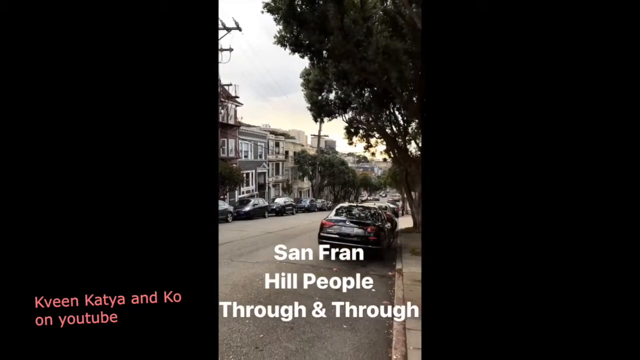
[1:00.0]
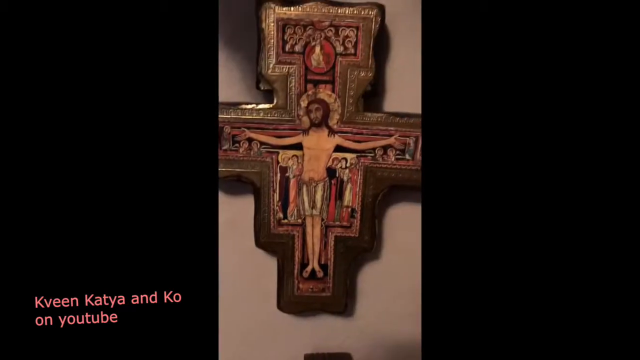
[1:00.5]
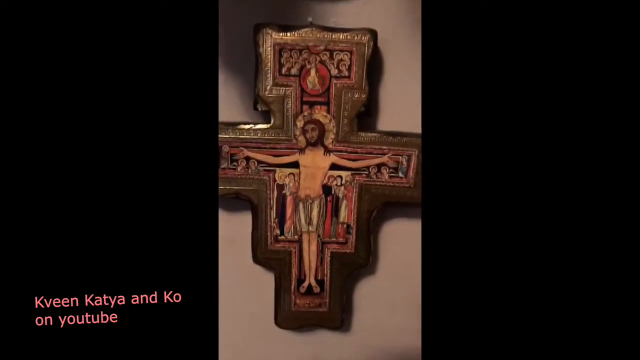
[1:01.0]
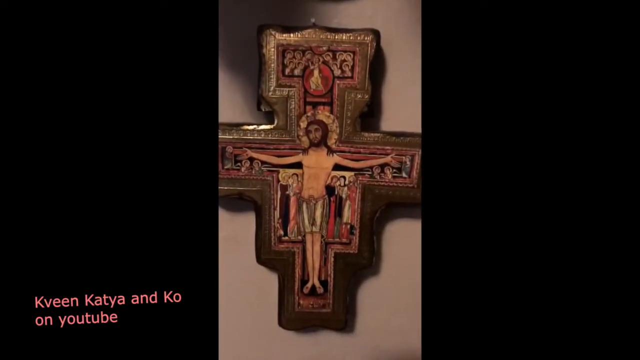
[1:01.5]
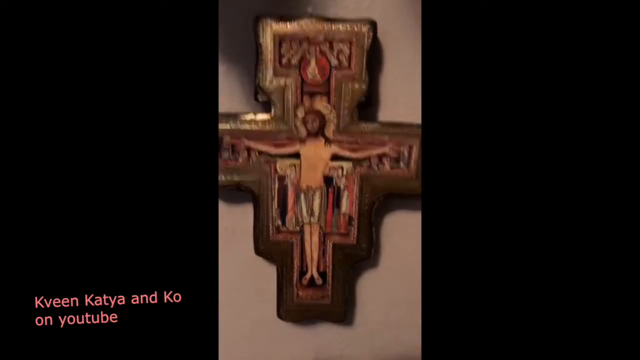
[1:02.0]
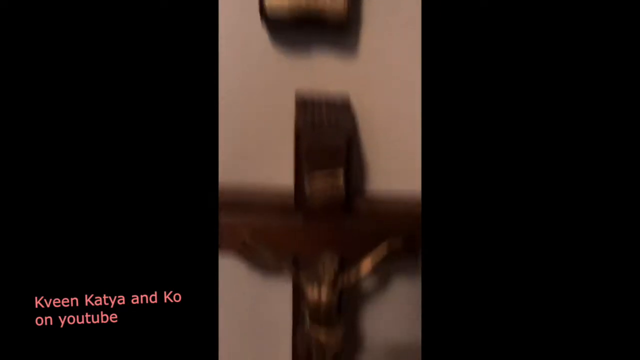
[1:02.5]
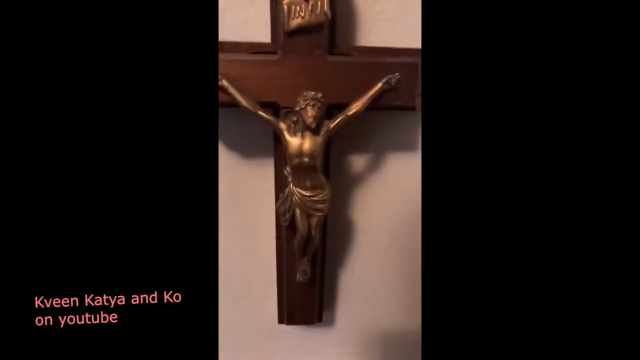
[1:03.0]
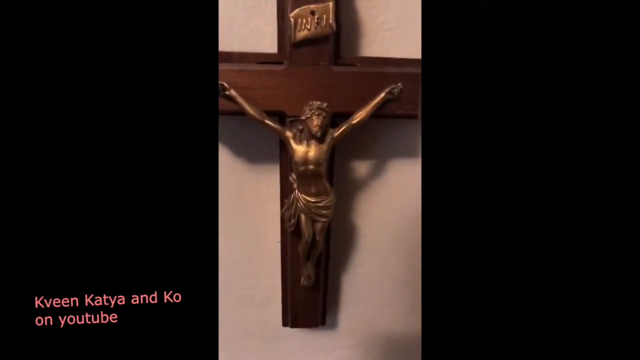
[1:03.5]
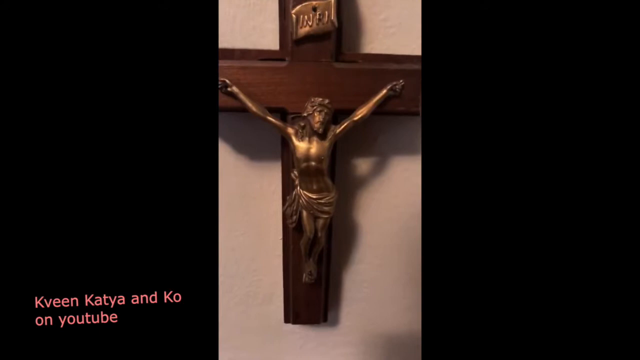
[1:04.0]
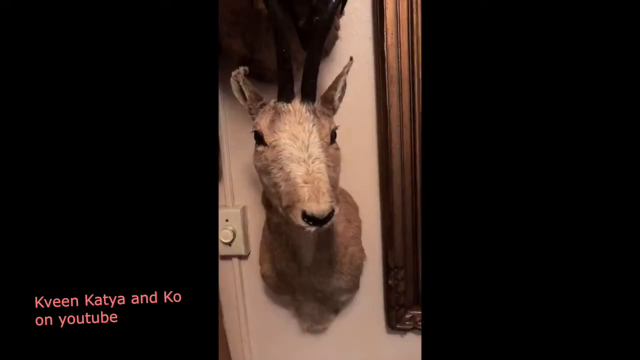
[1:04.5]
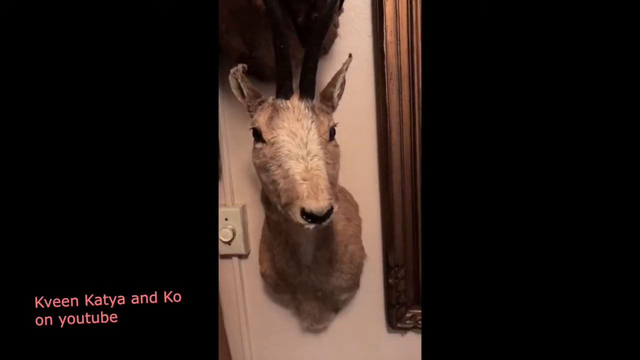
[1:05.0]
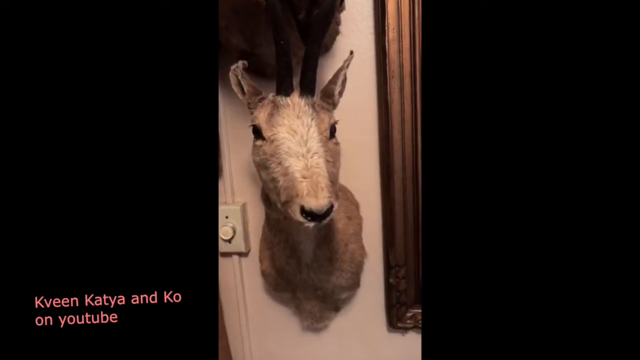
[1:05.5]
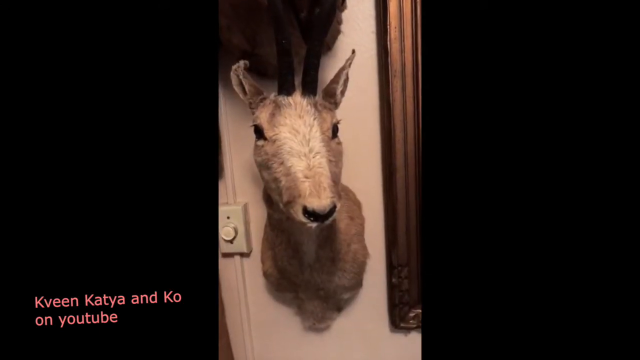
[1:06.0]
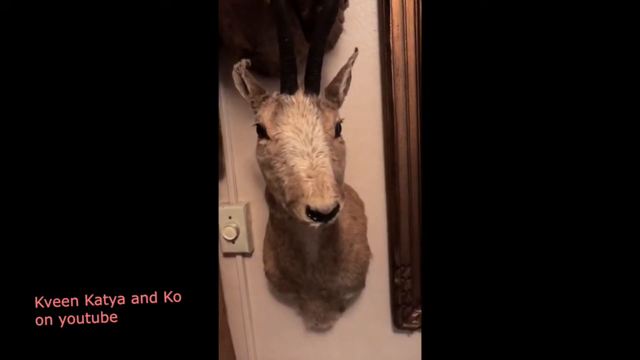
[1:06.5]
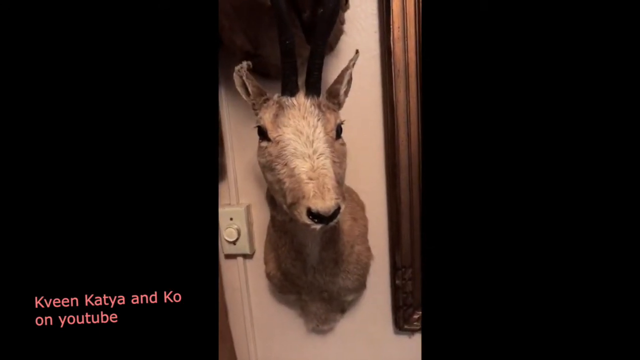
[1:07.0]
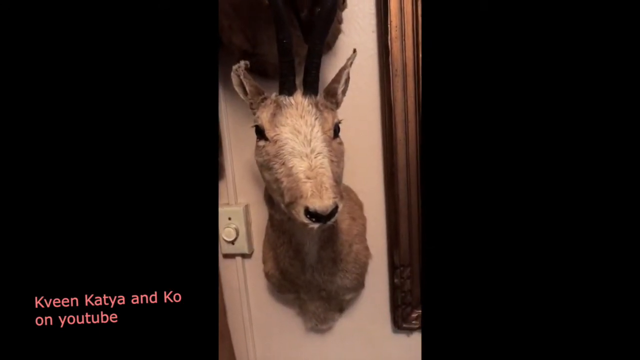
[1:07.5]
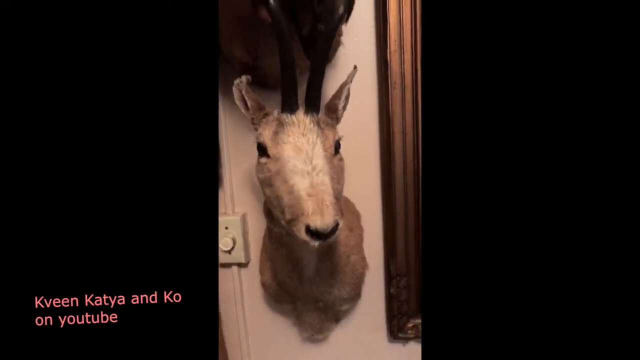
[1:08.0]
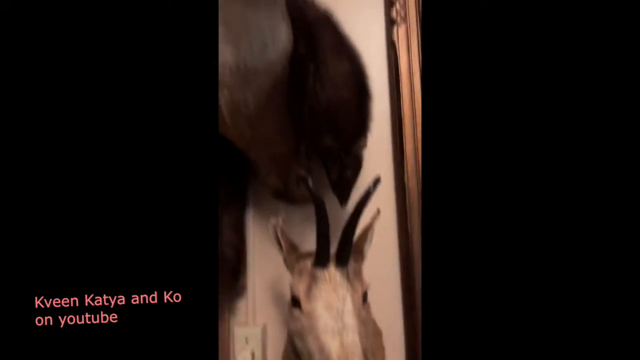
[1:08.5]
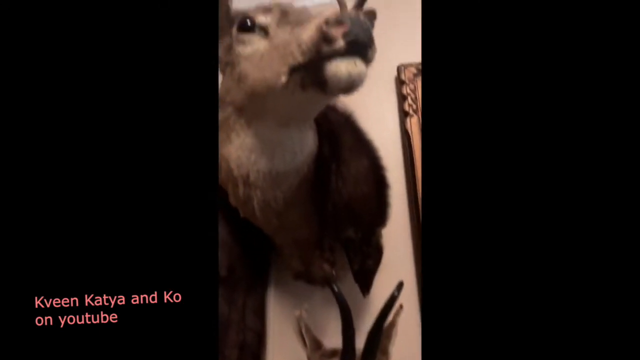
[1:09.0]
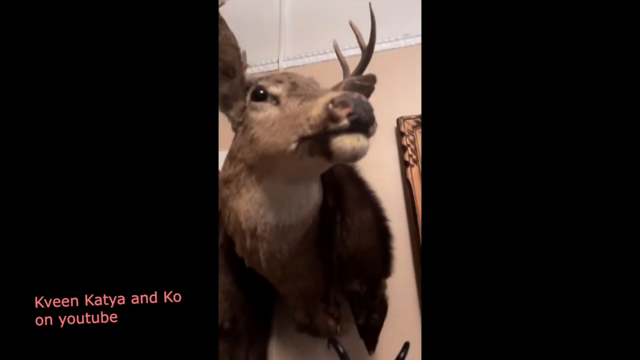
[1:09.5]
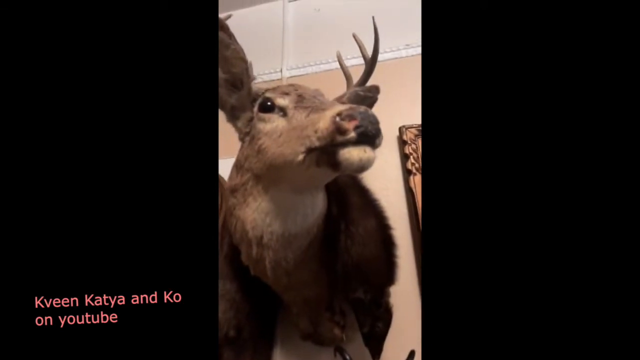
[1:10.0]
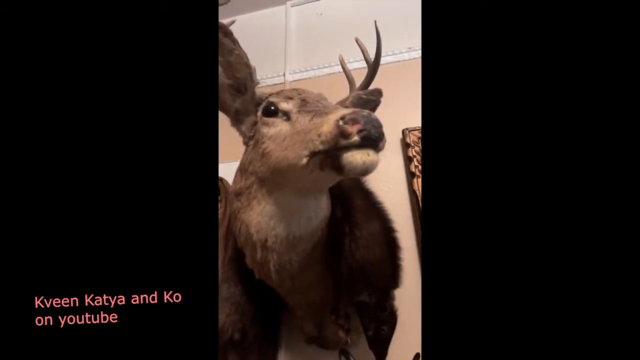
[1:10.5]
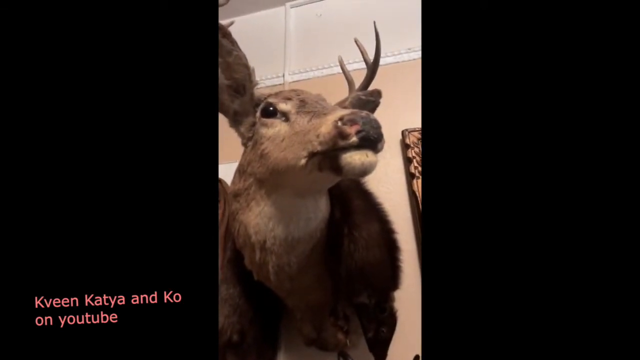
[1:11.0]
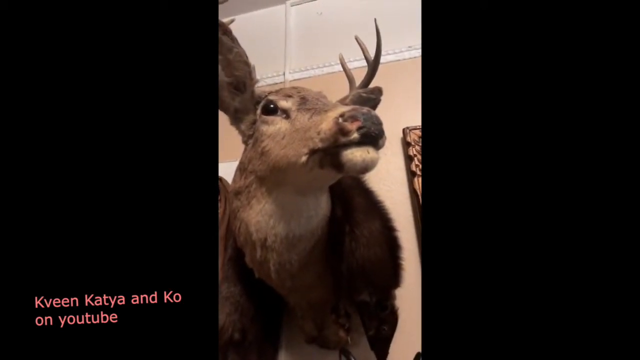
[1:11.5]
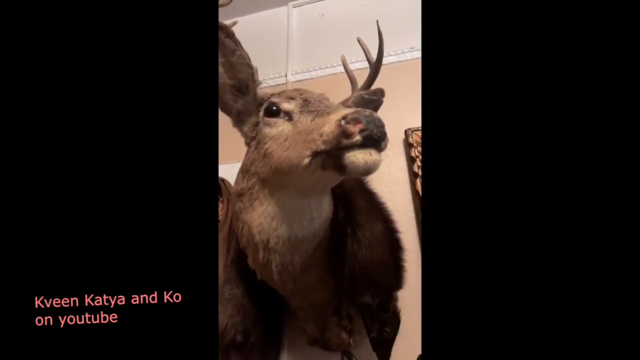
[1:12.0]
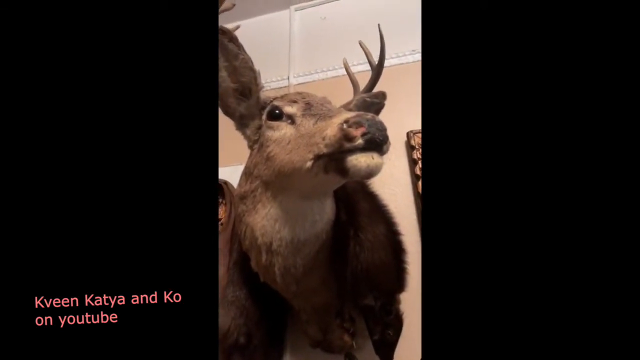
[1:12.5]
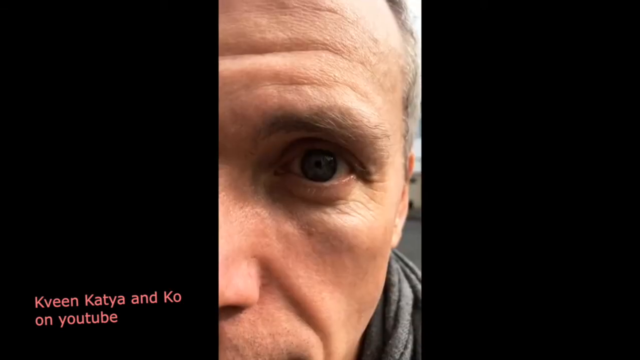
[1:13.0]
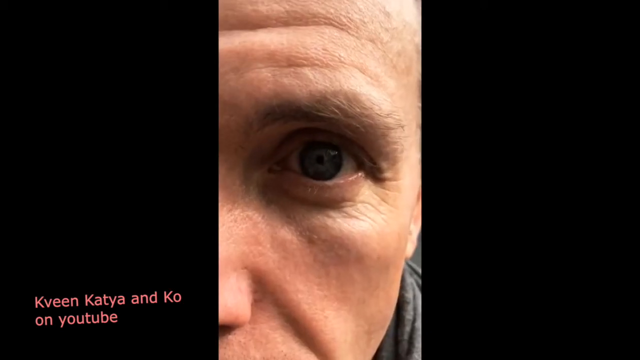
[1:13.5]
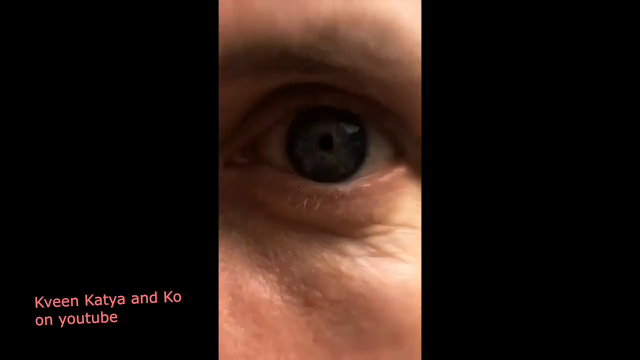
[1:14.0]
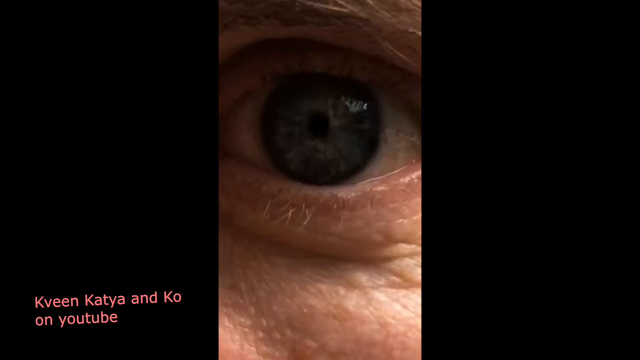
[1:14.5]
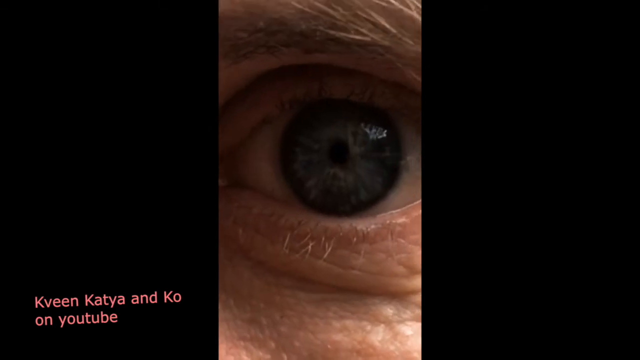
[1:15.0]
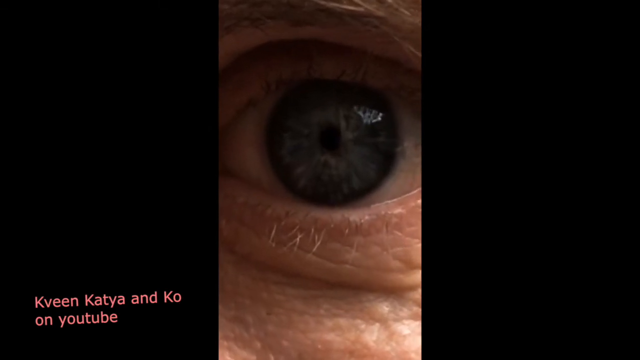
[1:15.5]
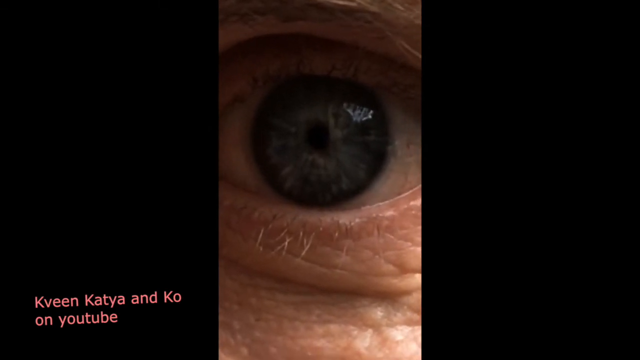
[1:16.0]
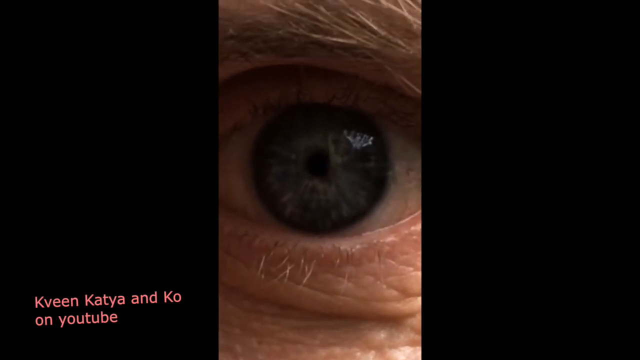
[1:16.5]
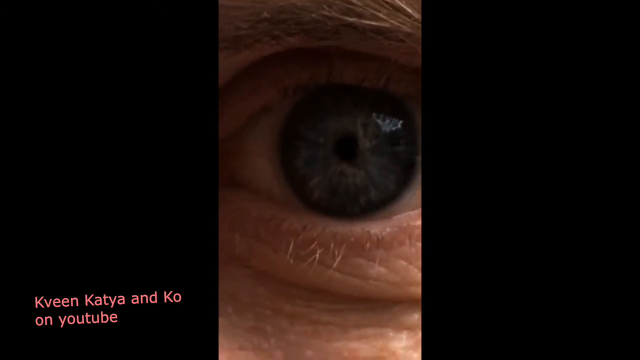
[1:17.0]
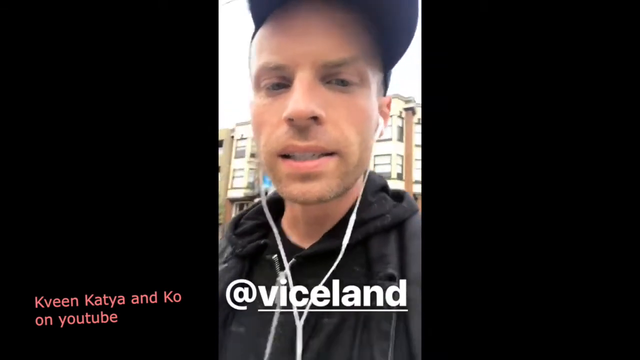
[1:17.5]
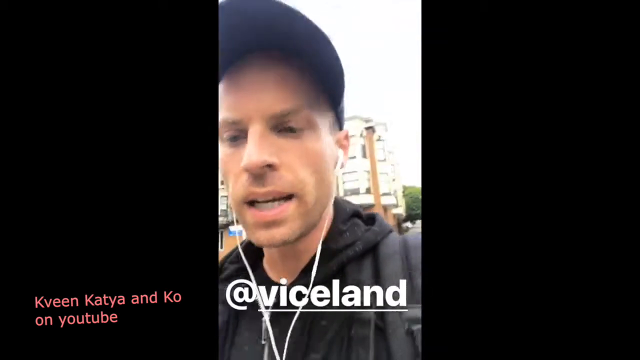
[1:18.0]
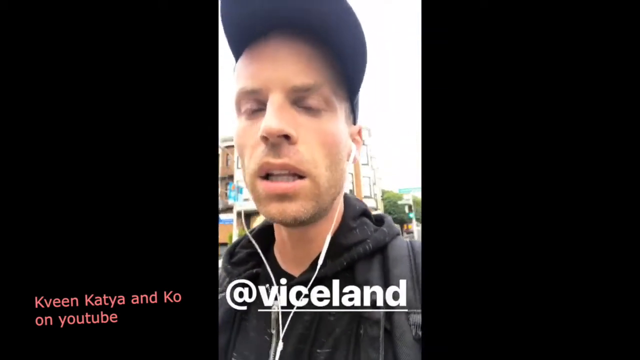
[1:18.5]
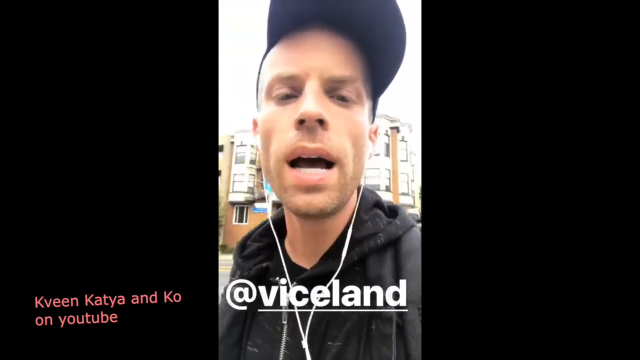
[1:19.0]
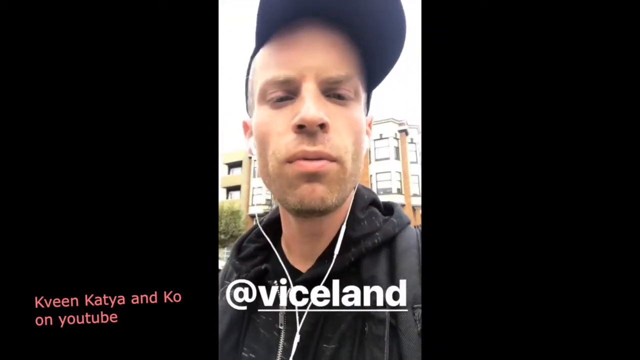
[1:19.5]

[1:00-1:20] Someone is outside, apparently near San Francisco, and the words "San Fran Hill people" are typed, followed by "through and through". A crucifix that is more flat, drawn and colorful is shown, and then the person videos a more three-dimensional, Roman Catholic one. There is something like a goat up on the wall, and then a deer is shown; both look taxidermied. The camera zooms in on the deer's eyeball so its inner workings can be seen. A man is then walking down the street, wearing a baseball cap and a black hoodie sweatshirt, with wires hanging down at the side from white wired earbuds in his ears. In front of his picture, text says "at vice land". Behind him is a red brick apartment complex.